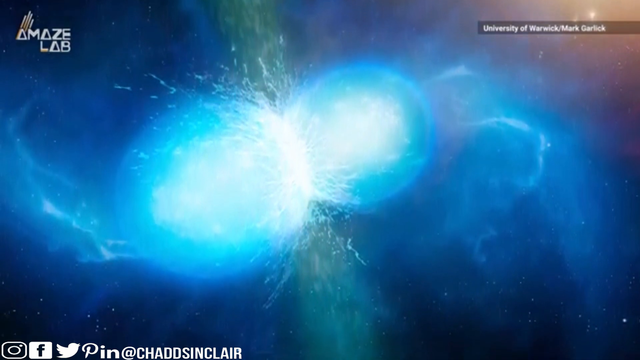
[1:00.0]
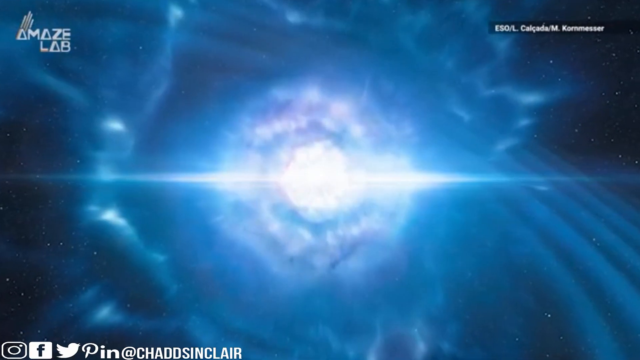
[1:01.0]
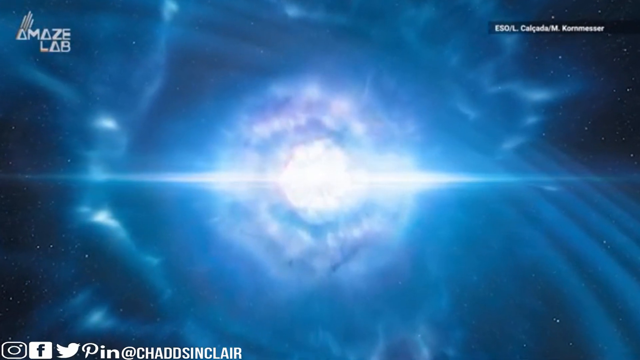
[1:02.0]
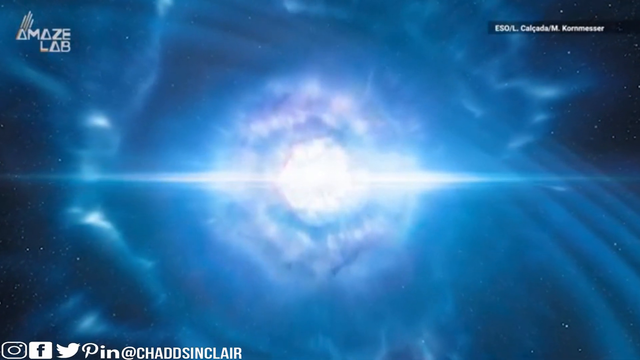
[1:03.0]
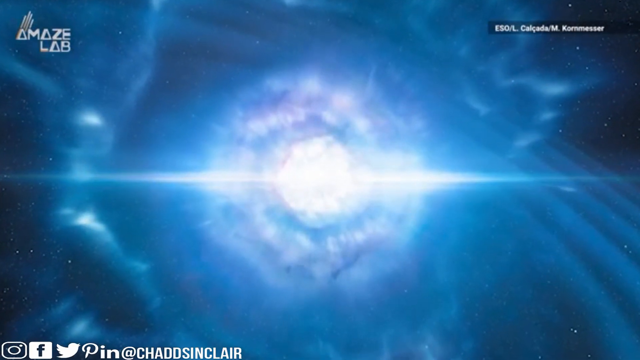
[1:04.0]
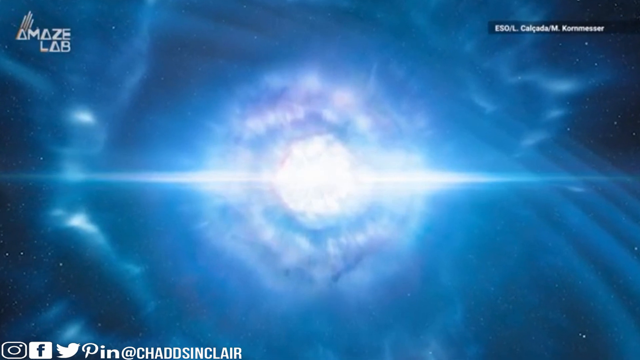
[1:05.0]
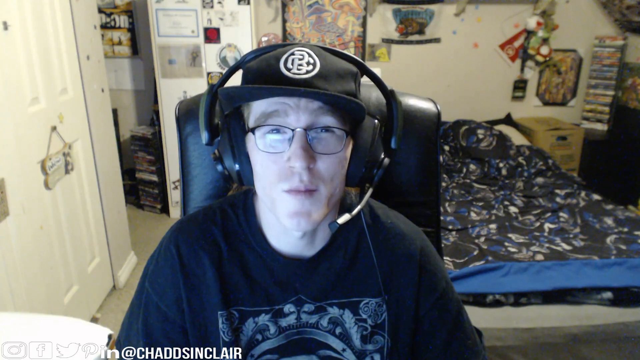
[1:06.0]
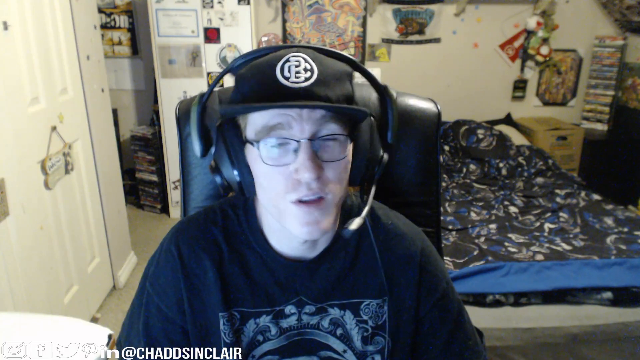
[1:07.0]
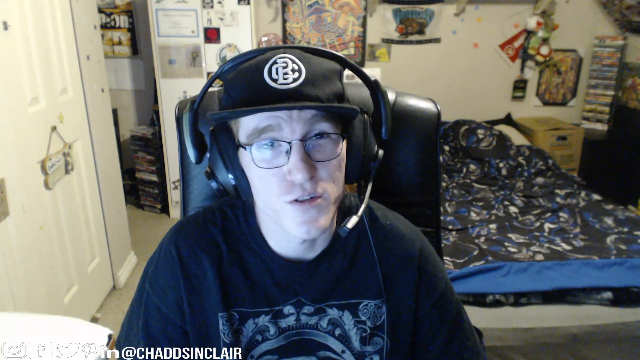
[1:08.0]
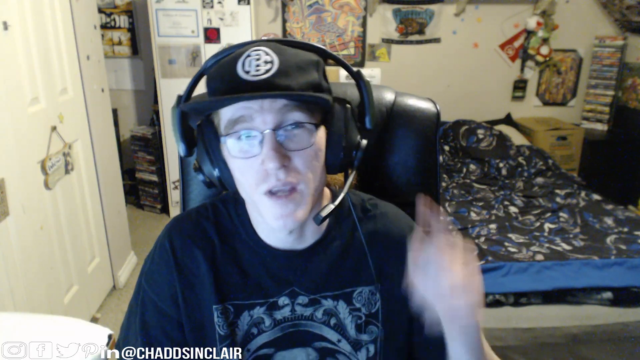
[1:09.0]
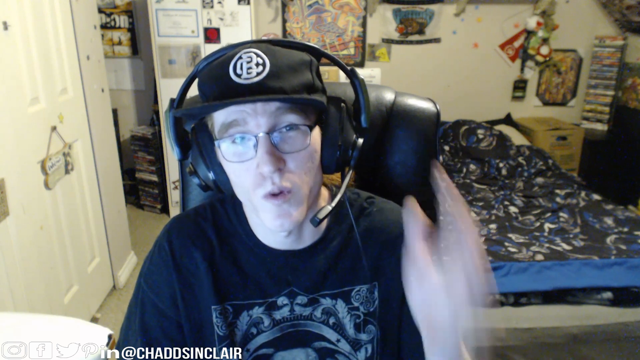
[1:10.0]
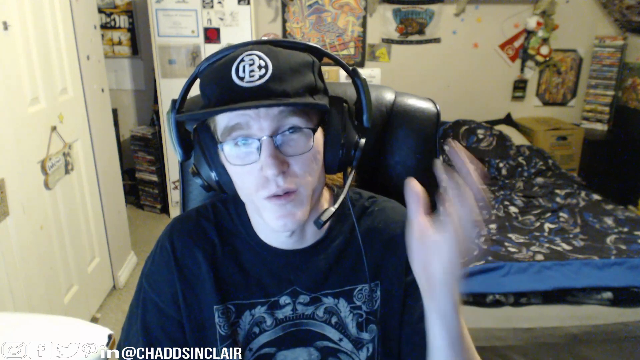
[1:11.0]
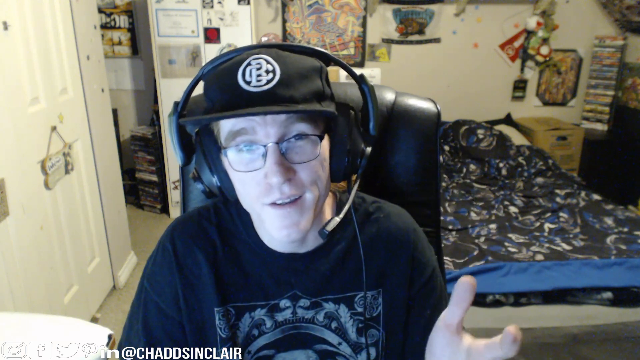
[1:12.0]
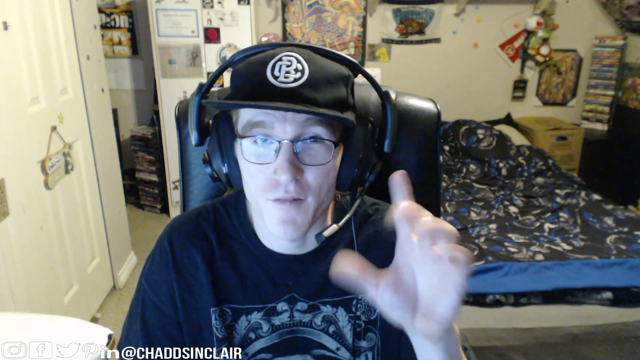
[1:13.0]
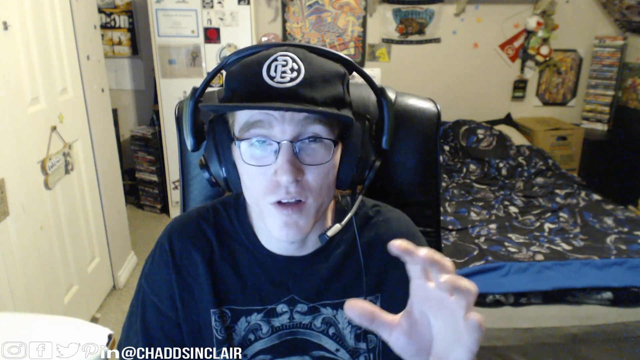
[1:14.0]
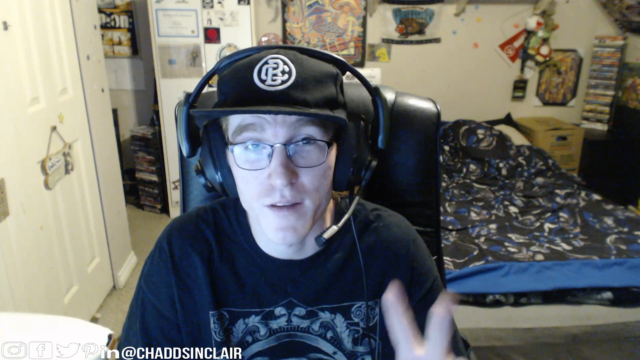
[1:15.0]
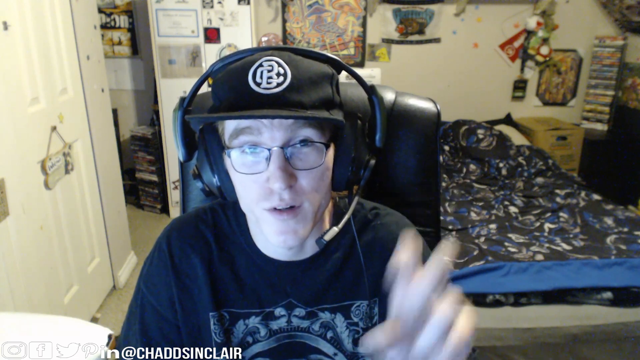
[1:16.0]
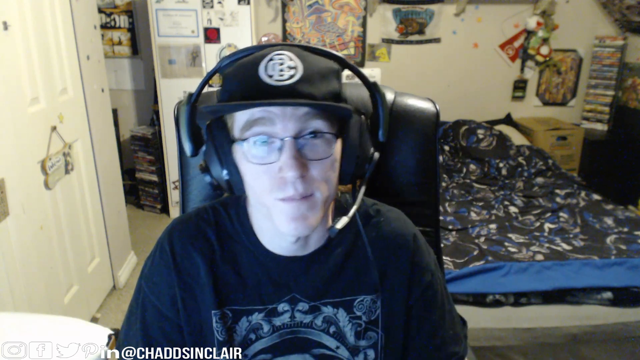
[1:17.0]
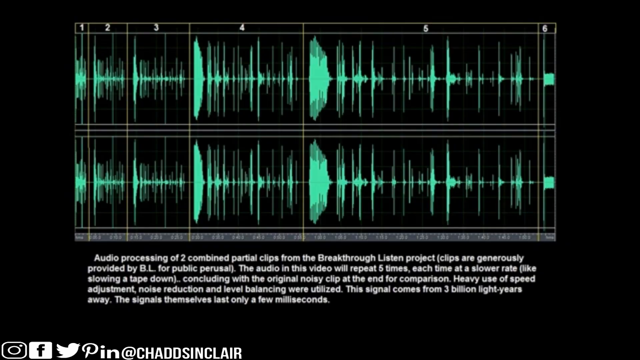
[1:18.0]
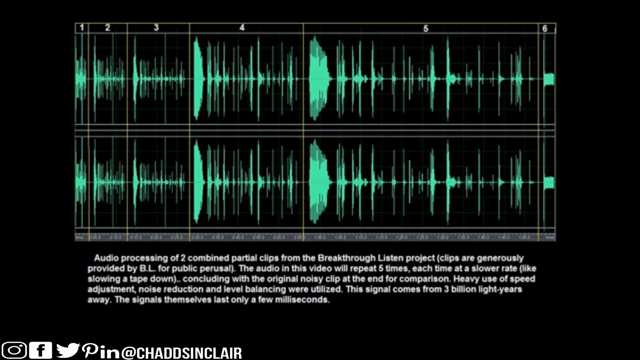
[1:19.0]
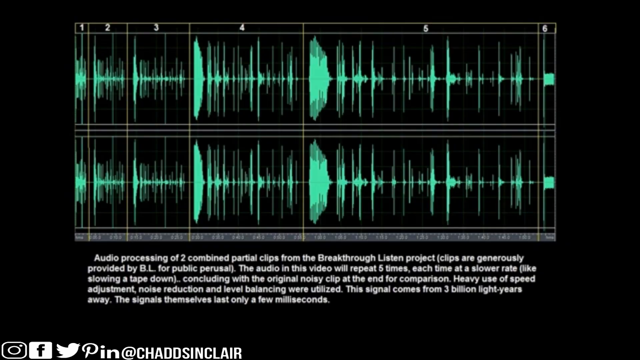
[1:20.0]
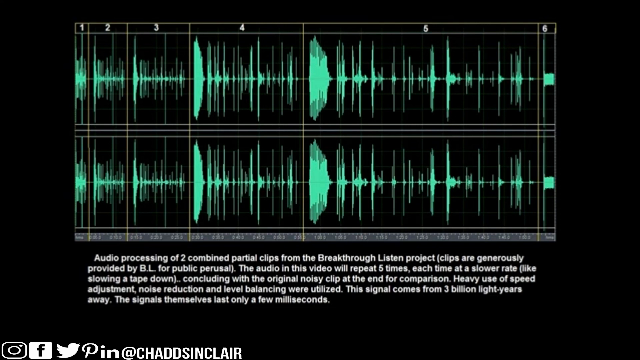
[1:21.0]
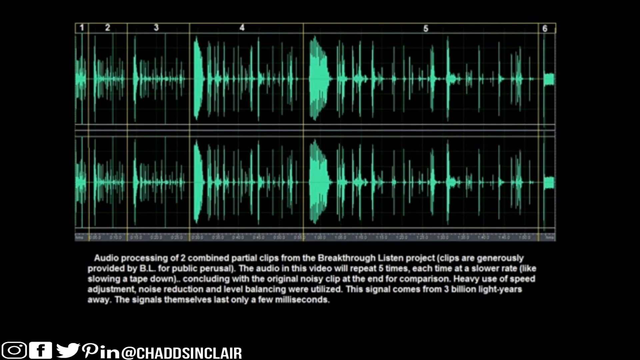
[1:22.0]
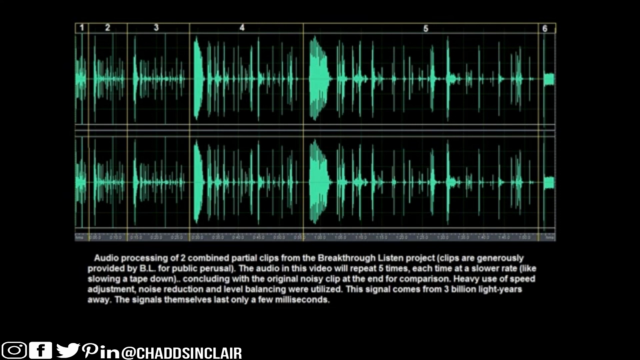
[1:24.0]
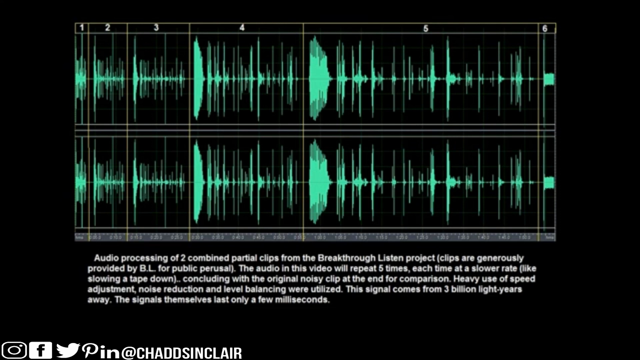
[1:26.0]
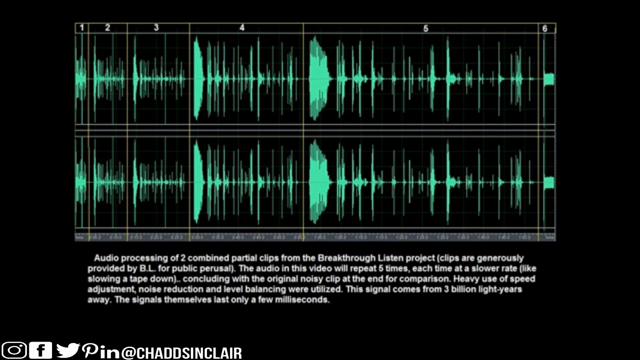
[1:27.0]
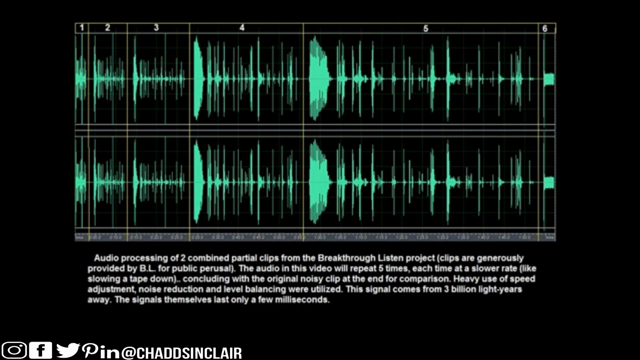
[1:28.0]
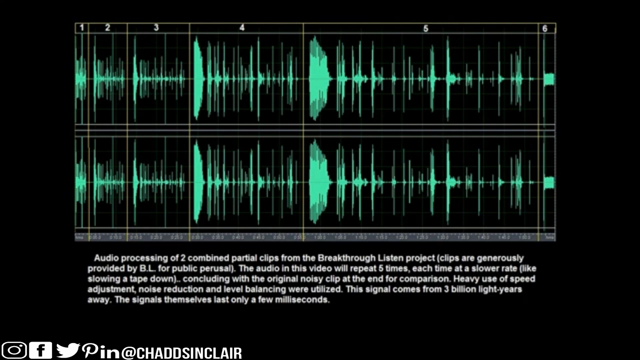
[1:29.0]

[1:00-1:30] An image resembling lightning appears as a mirror image of two balls, each bright white in the middle and turning light blue further out, possibly a bang. In a corner are the Instagram, Facebook, Twitter, Pinterest and LinkedIn logos. A man talks, wearing a headset, a black cap with a white design and a short-sleeved black shirt, sitting in a black chair. The two green waves appear again with the same wording seen at the beginning.